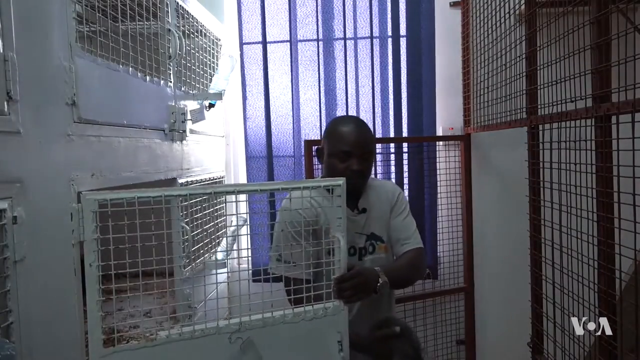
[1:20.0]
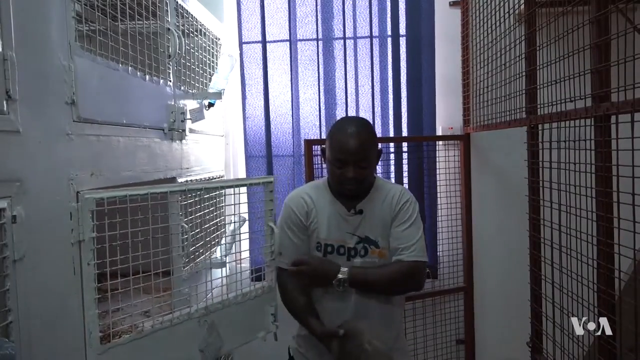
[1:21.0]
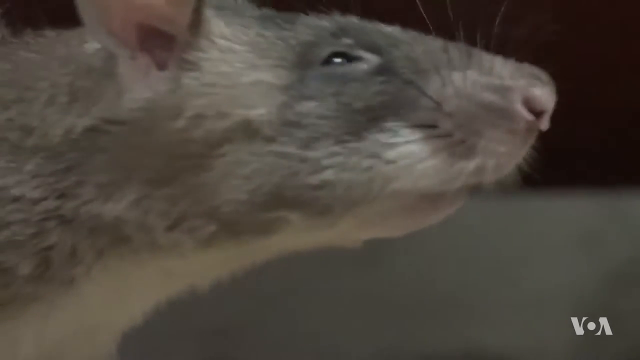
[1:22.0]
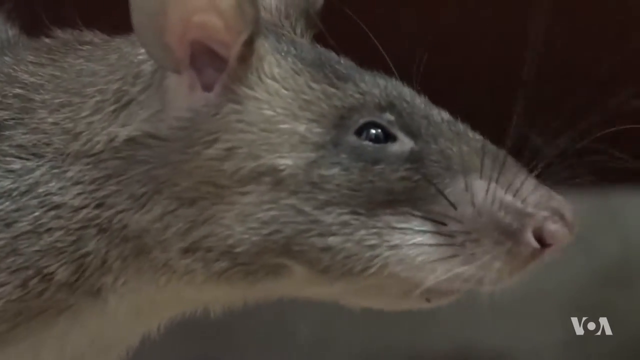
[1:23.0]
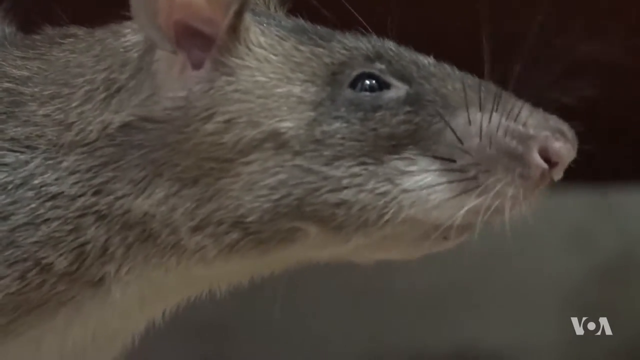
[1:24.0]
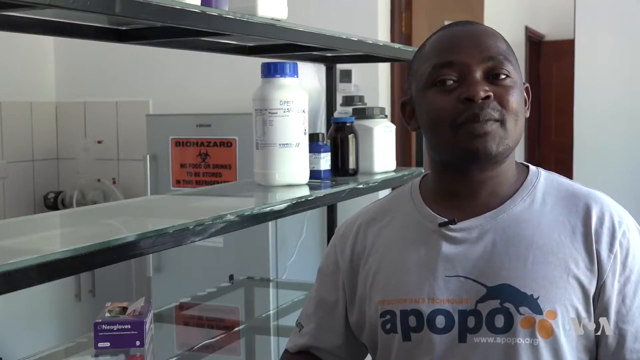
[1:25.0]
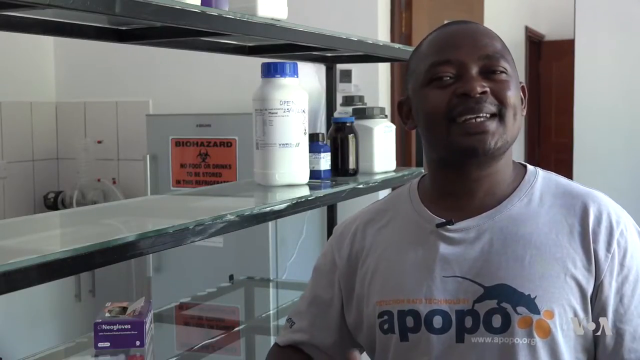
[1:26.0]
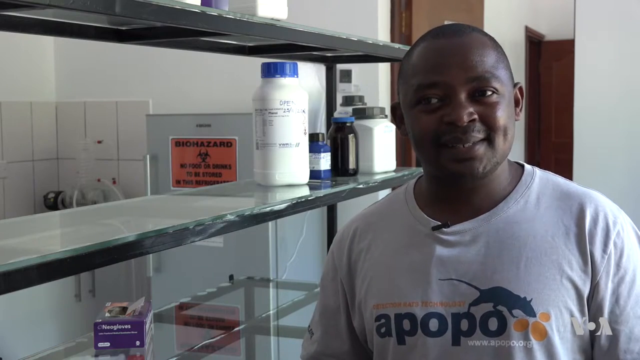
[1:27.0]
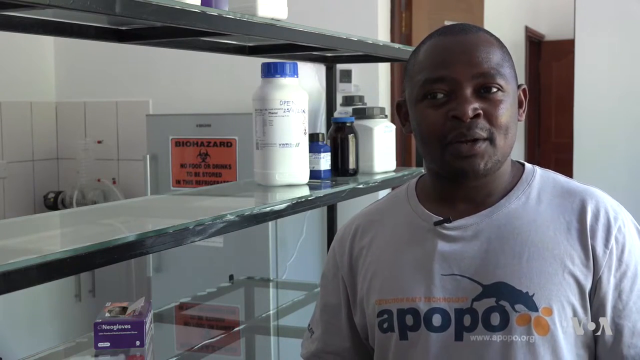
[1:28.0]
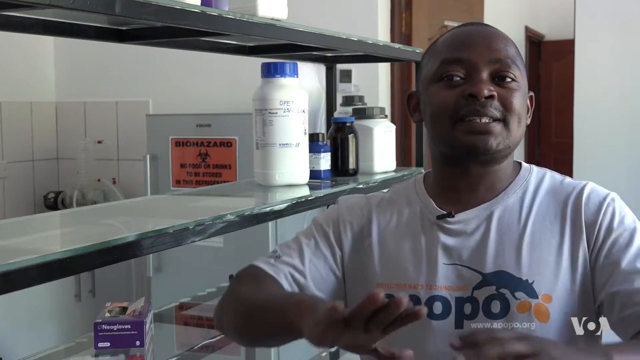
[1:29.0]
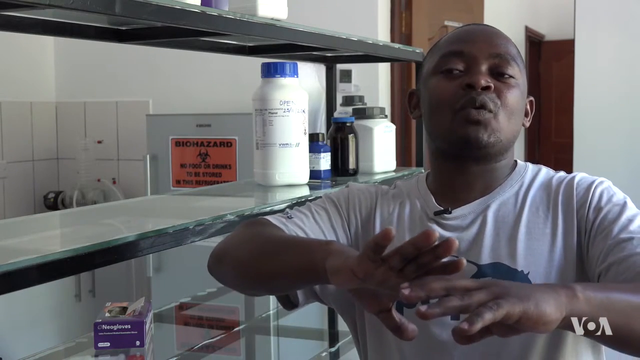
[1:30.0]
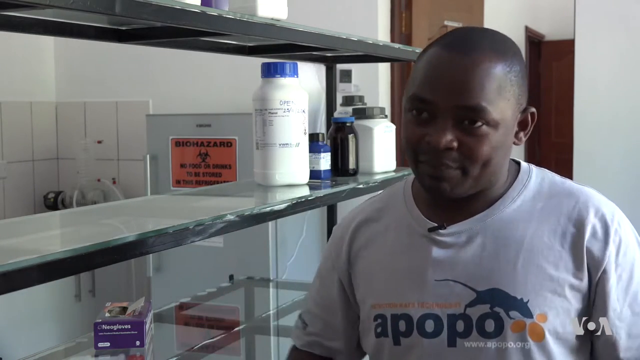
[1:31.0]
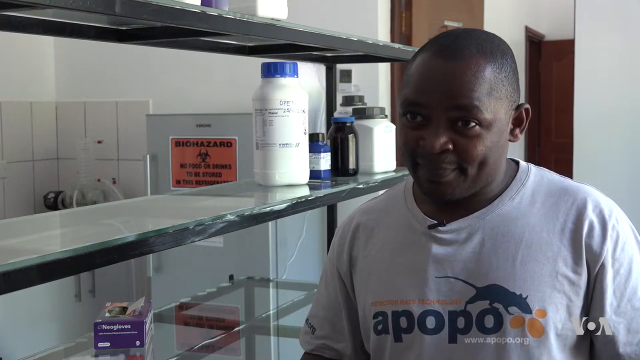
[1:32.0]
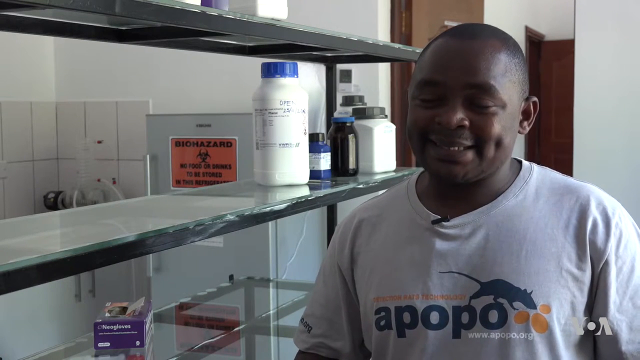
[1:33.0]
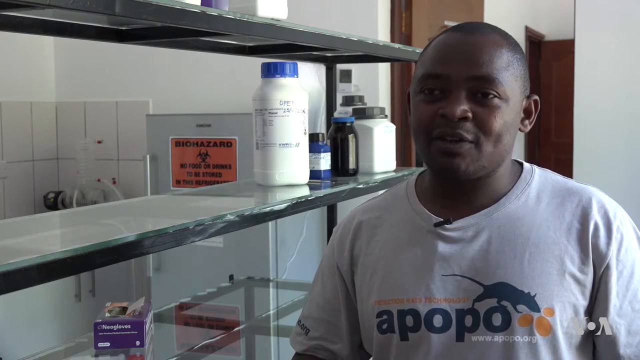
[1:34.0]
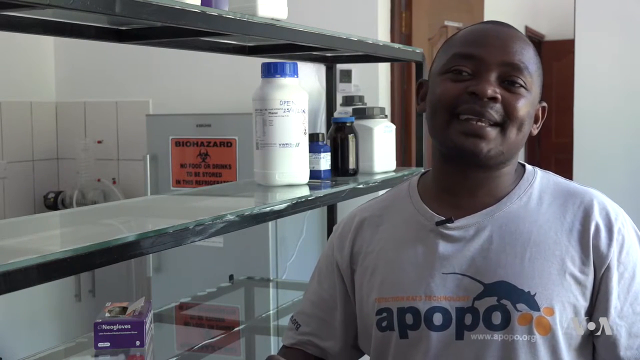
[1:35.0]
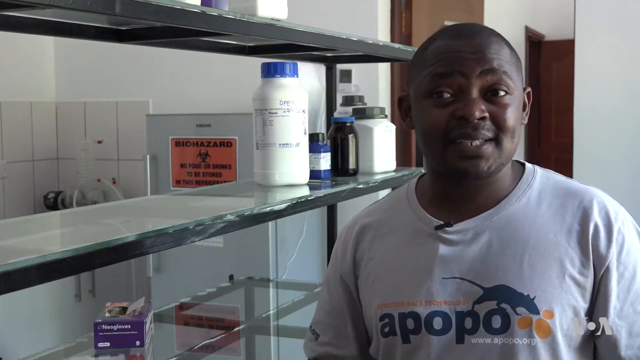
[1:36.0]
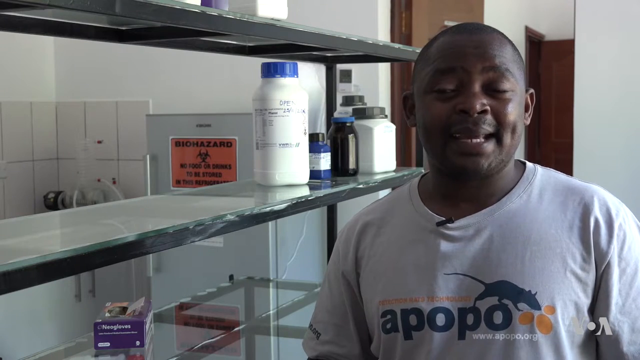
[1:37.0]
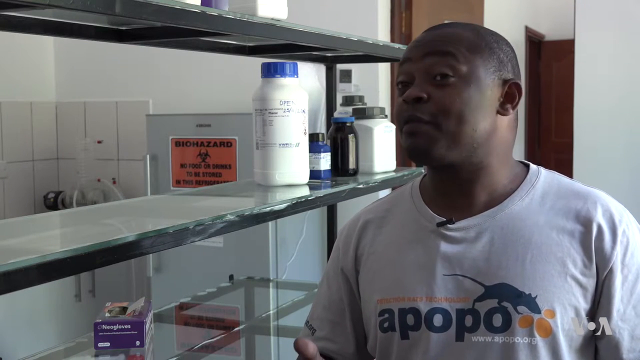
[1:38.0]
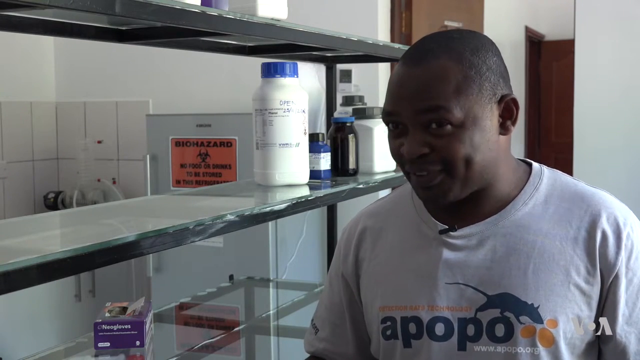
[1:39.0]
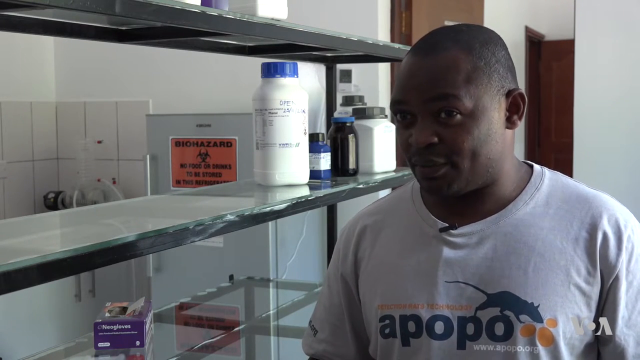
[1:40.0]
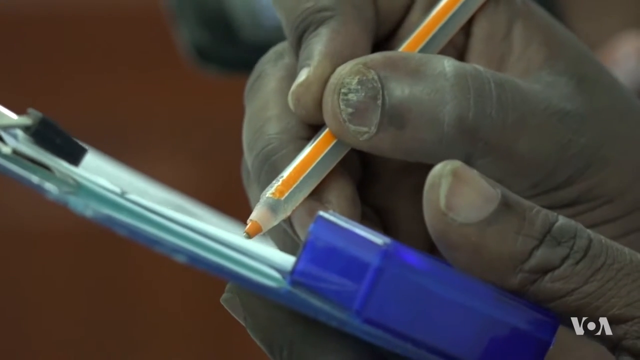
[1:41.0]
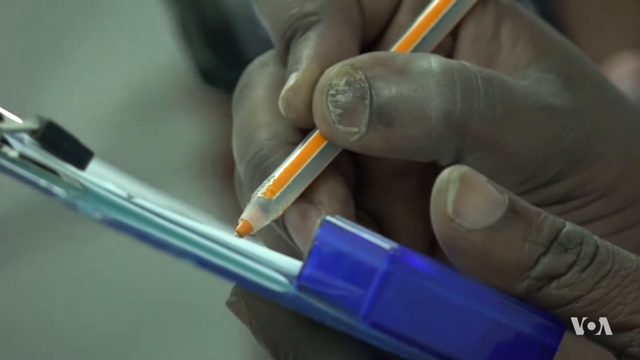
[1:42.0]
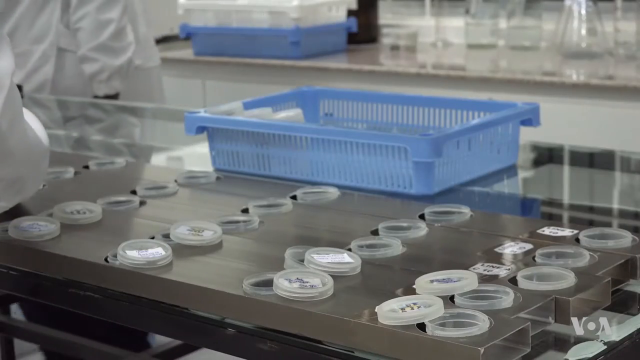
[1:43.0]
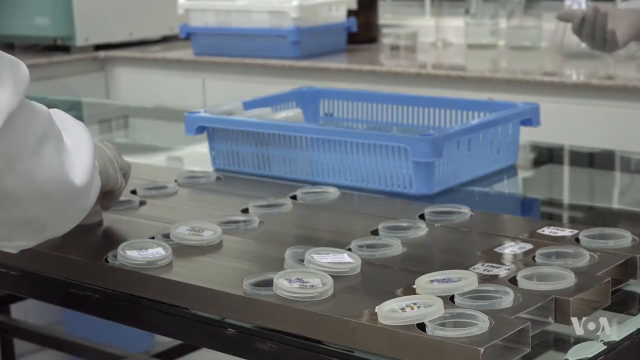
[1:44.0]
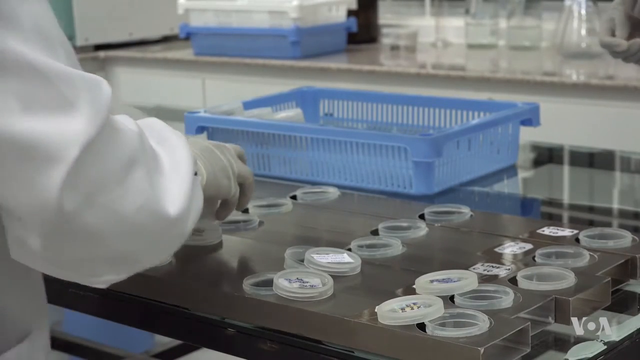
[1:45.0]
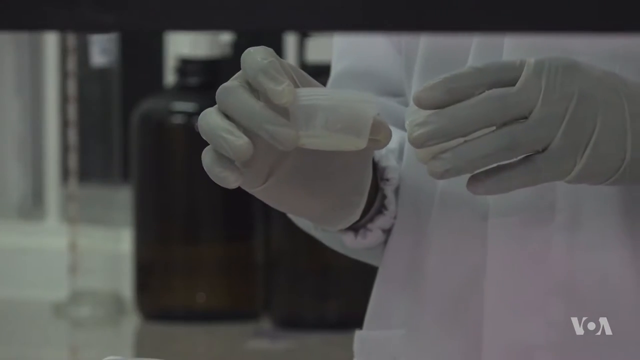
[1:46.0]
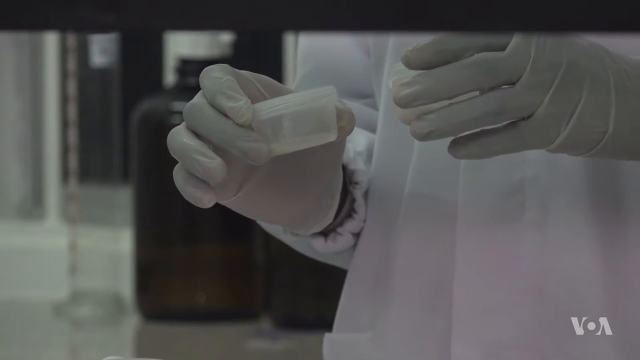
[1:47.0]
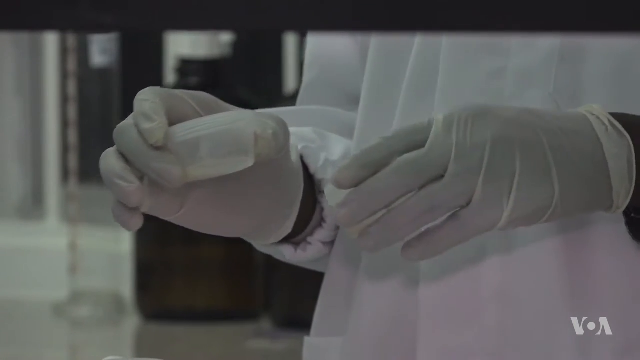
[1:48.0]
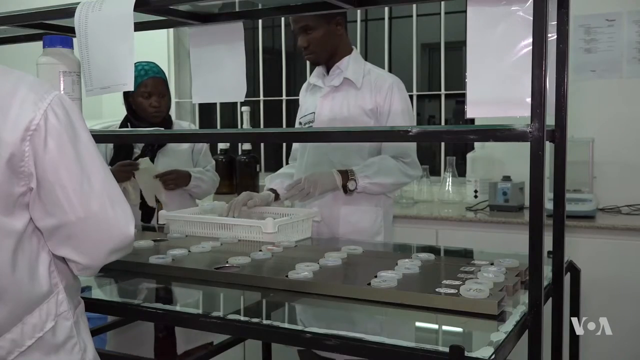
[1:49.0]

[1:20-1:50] The man continues taking a rat out of the cage; this rat looks more gray and white. The video cuts back to the man being interviewed, who is in some sort of storage room with shelves to his left. On the middle shelf are a couple of medical bottles, including a big white one with a label and a blue cap. At the top are other containers that are hard to see. On the other side of the shelf is some sort of biohazard cabinet that is locked up. As he talks, the video transitions to footage of someone writing on a clipboard with a pen, and then many tubes placed in a metal tray.